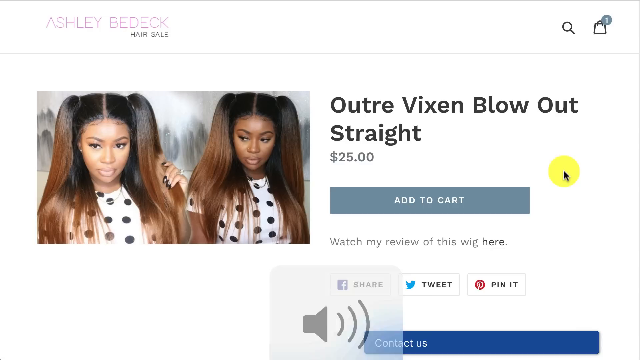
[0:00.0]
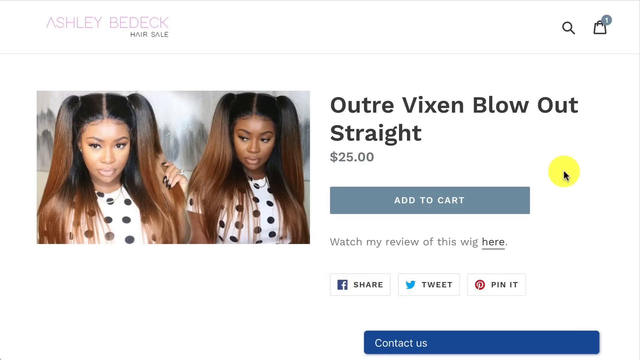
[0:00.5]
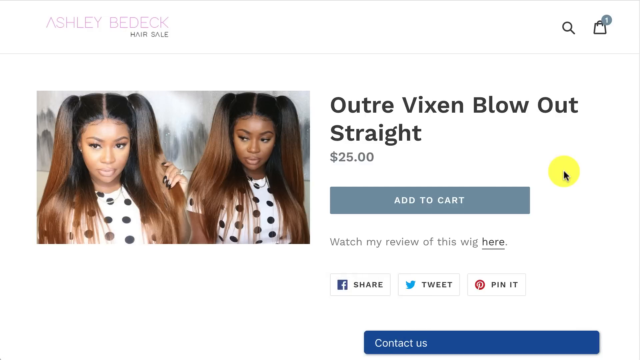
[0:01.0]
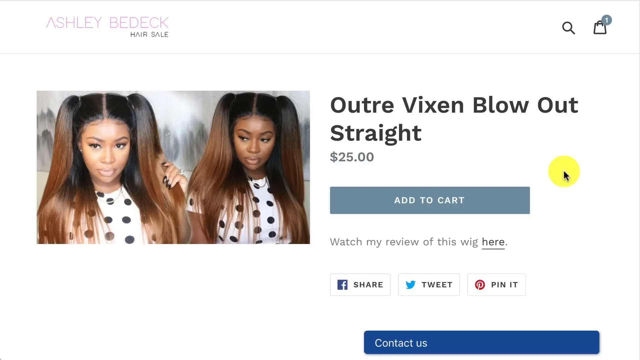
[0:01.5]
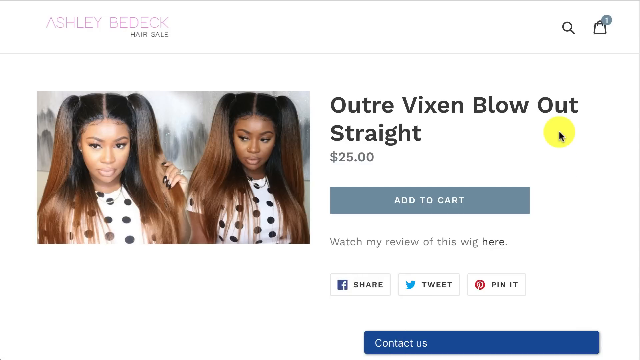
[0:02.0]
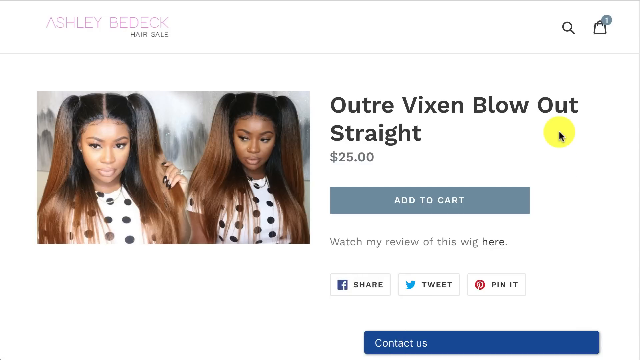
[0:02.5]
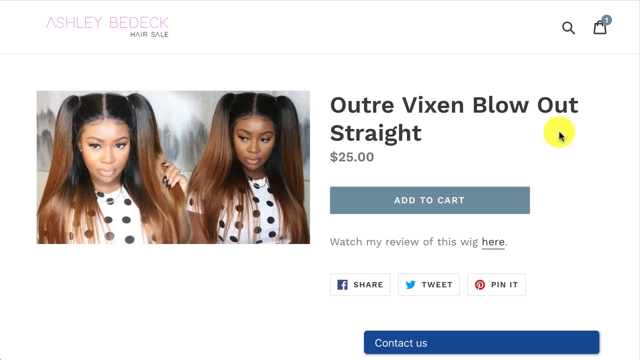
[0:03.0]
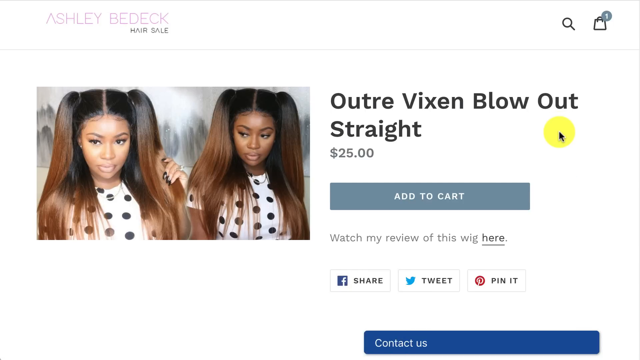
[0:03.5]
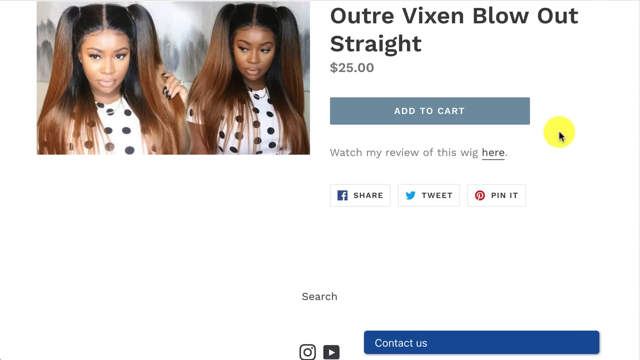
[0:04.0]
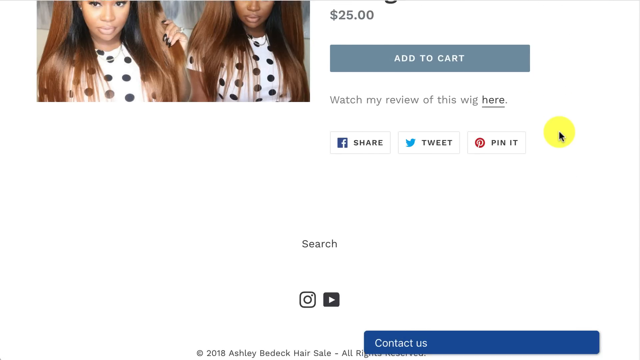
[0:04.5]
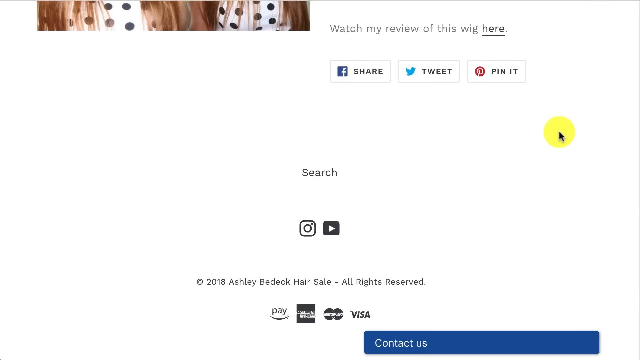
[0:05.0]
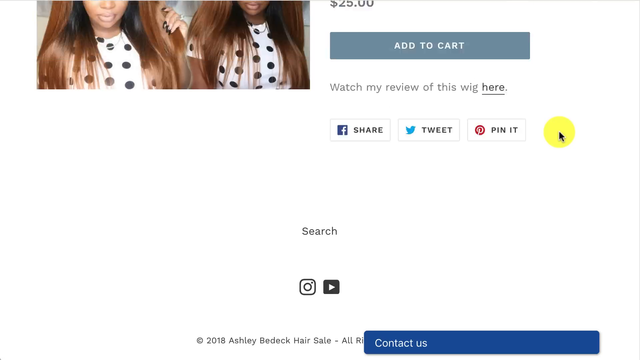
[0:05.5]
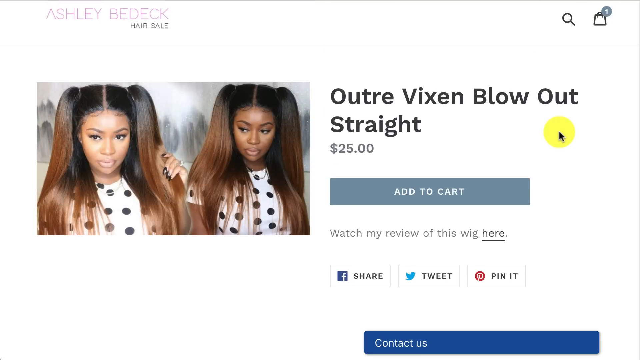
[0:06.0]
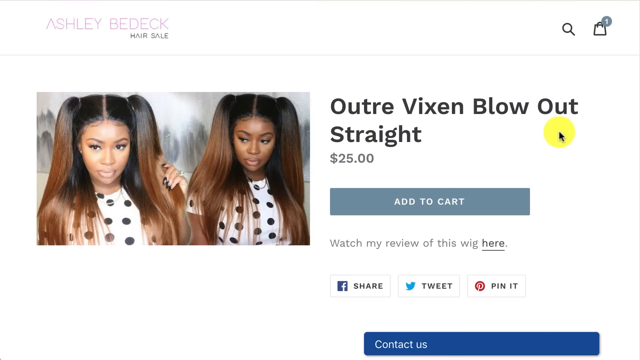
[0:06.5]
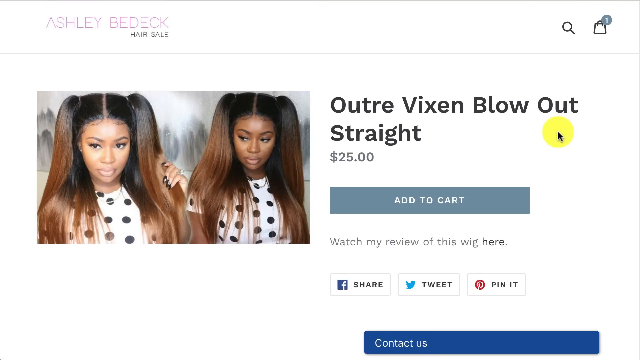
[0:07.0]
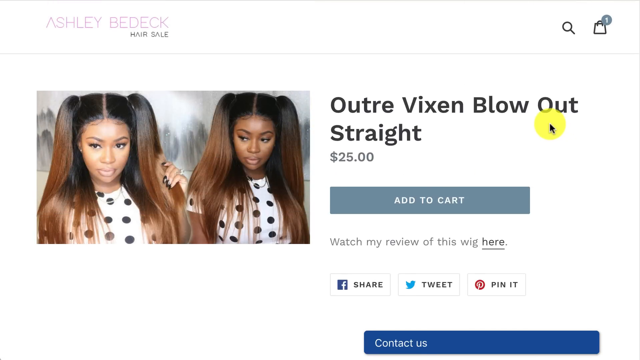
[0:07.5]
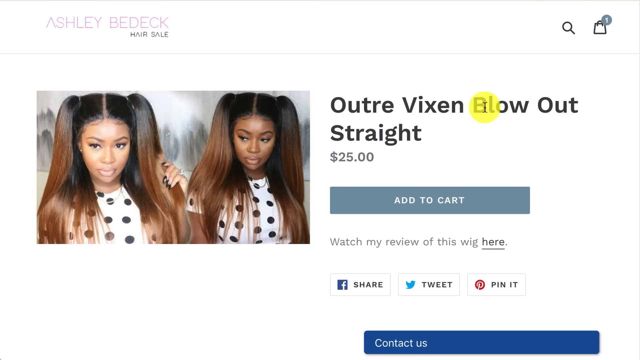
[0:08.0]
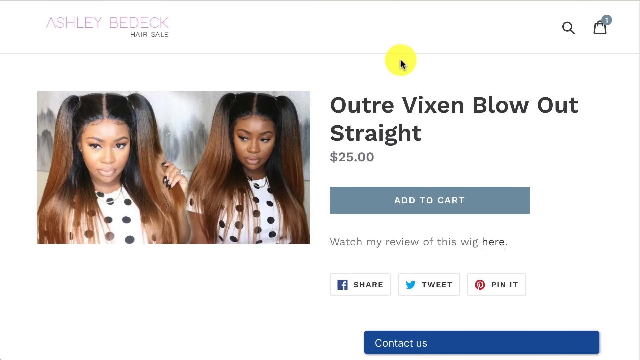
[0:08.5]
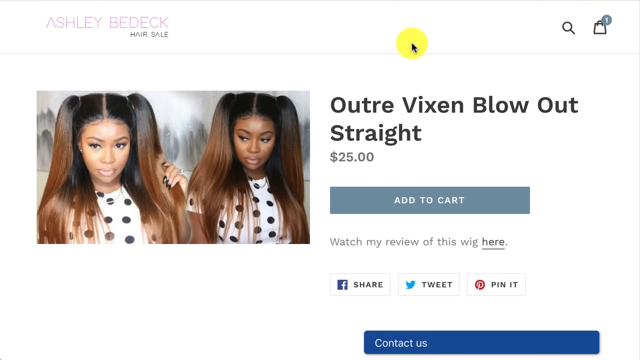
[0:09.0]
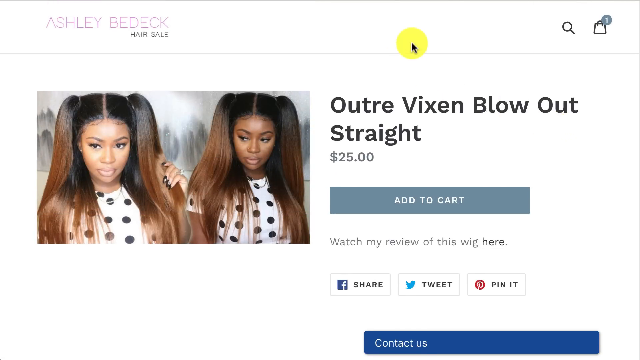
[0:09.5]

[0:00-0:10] The video opens on what appears to be a website. At the top left it reads "Ashley Bidek hair sale," and below this is what appears to be a young Black female model. She appears to be wearing some sort of wig: she has pigtails, with the rest of the hair flowing loose. The hair is very long and two-toned, black with the bottom a brownish red color. She wears a white shirt with black polka dots, and her fingernails are black. In one of the pictures she stares directly at the camera; in the one beside it she stares off to the right. Beside this, in bold font, is "Ultra Vixen Blowout Straight," and under it, in smaller font, "$25." A yellow-brown circle is off to the right. Underneath the "$25" is "add to cart," a bluish-gray button, and underneath that is "watch my review of this wig here." There are social links for following this person's channels. The page scrolls down and then back up, and the yellow dot turns out to be the mouse cursor moving around.